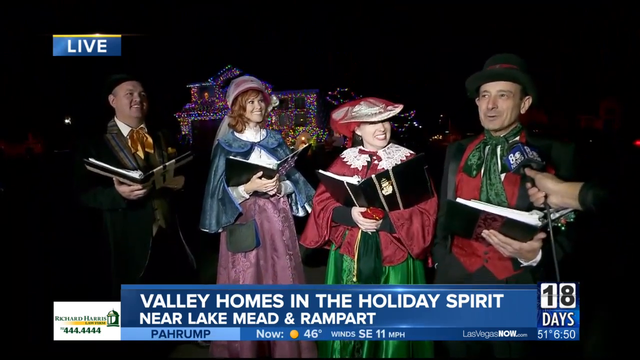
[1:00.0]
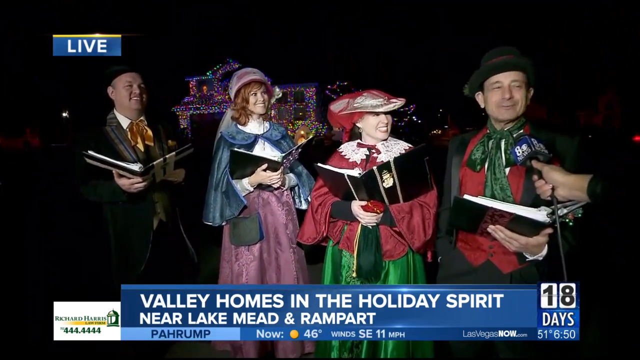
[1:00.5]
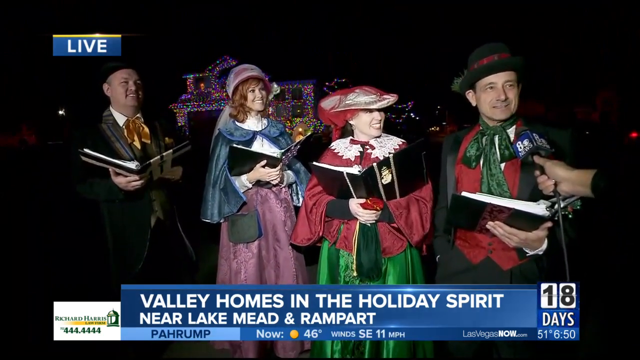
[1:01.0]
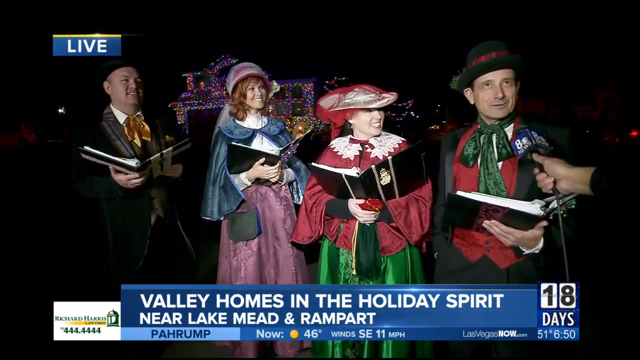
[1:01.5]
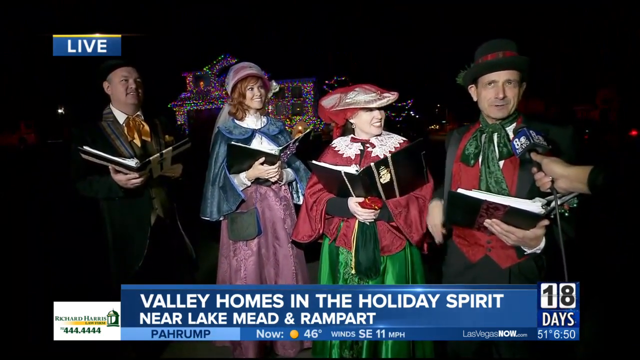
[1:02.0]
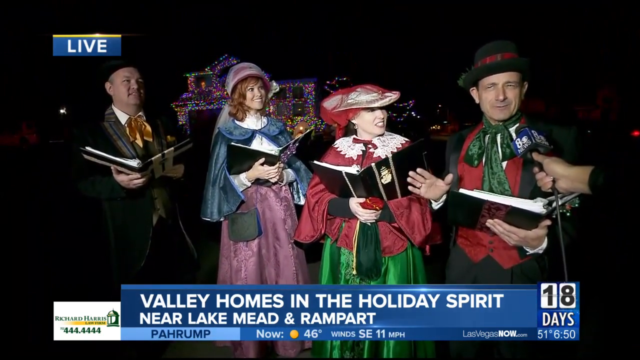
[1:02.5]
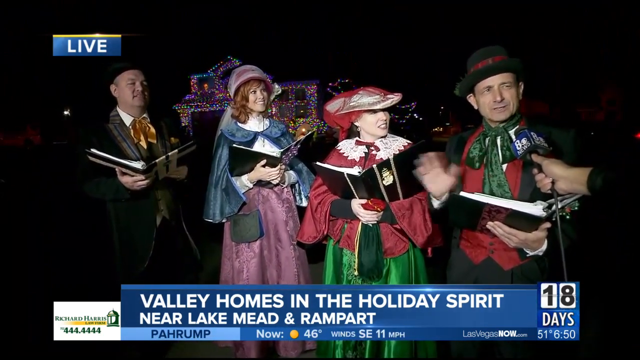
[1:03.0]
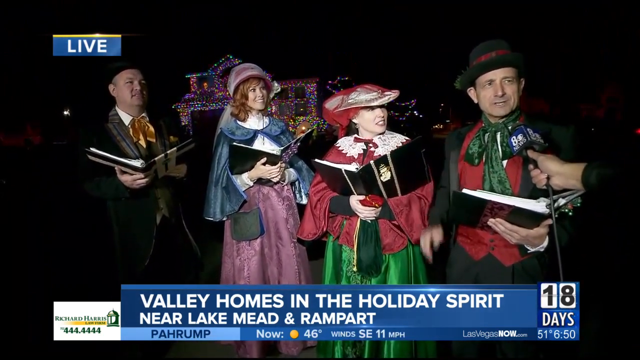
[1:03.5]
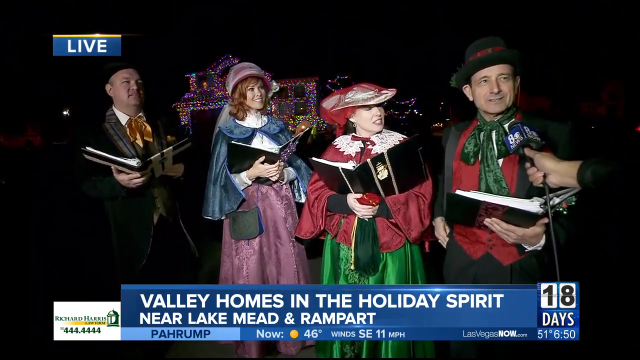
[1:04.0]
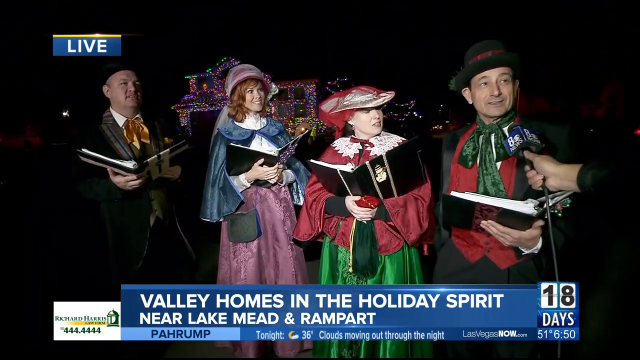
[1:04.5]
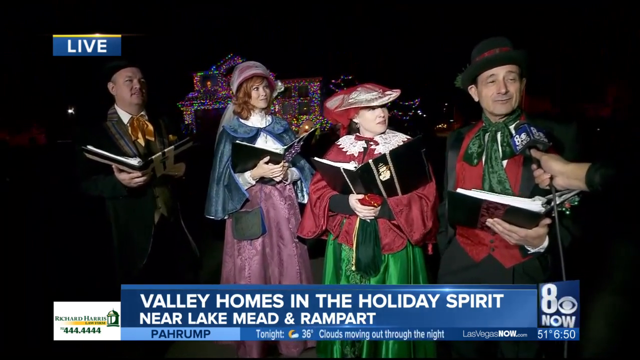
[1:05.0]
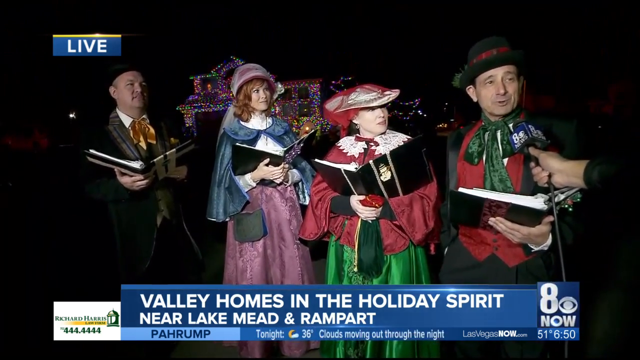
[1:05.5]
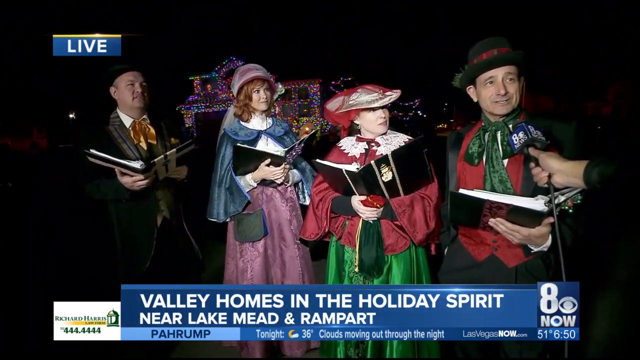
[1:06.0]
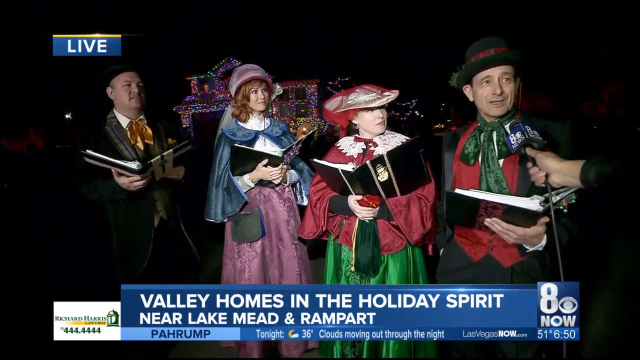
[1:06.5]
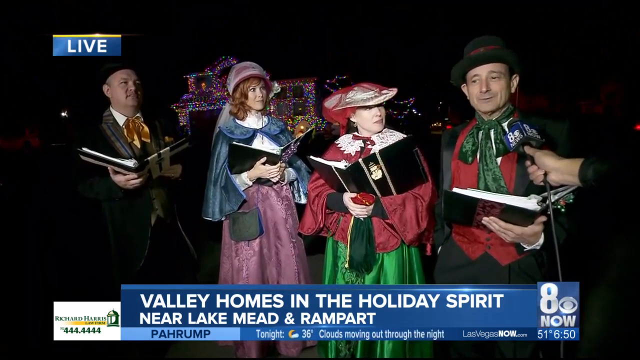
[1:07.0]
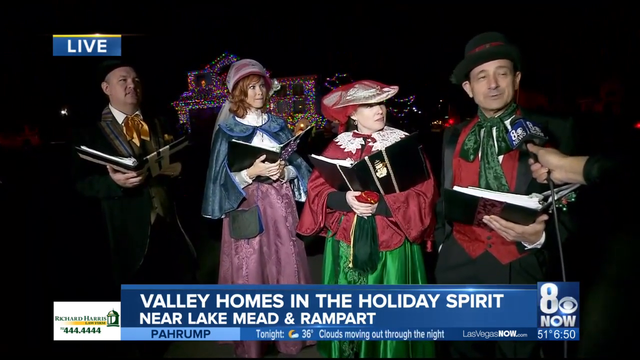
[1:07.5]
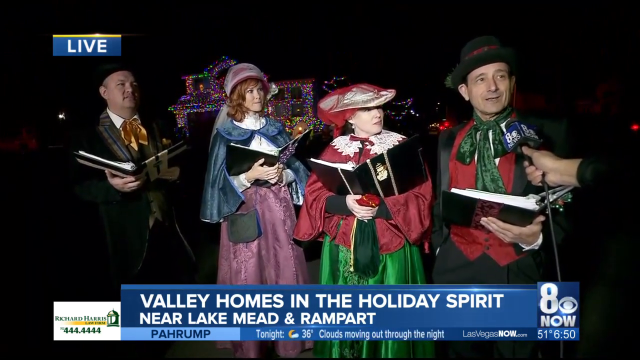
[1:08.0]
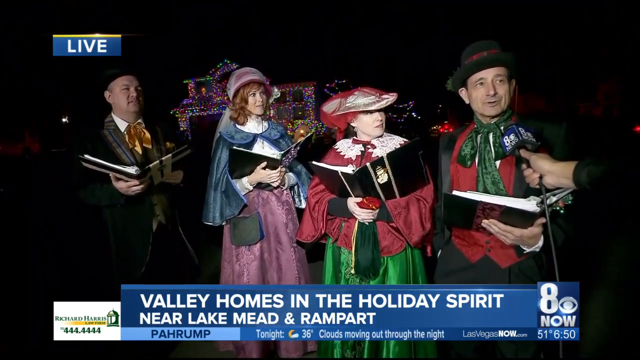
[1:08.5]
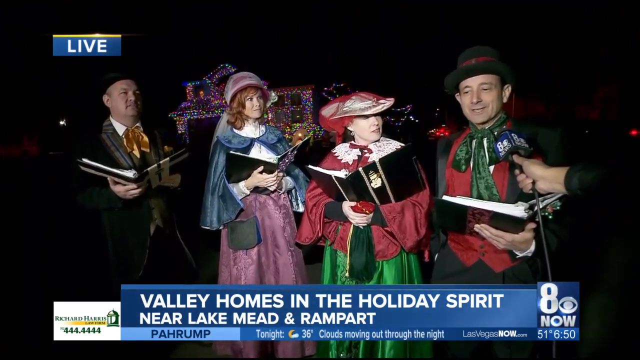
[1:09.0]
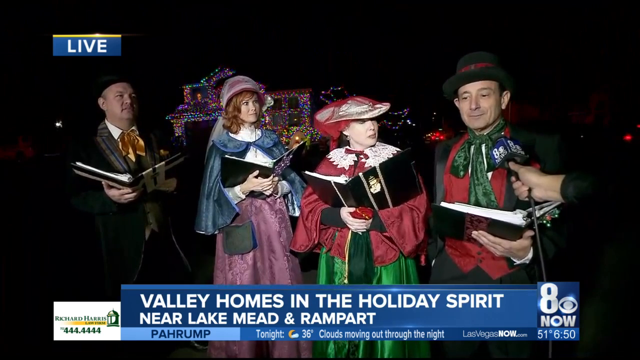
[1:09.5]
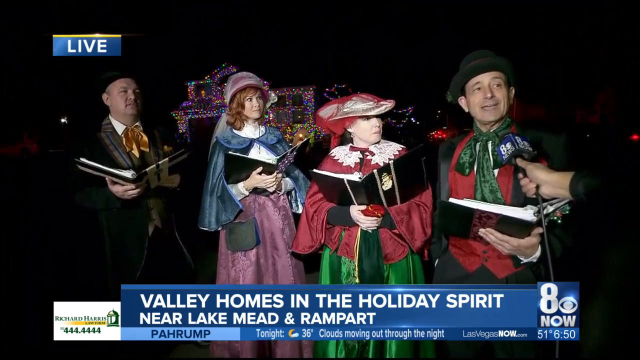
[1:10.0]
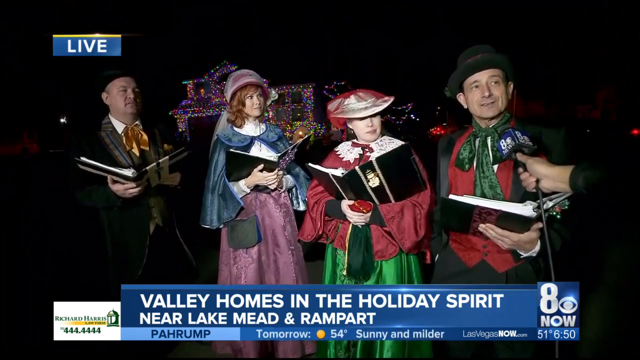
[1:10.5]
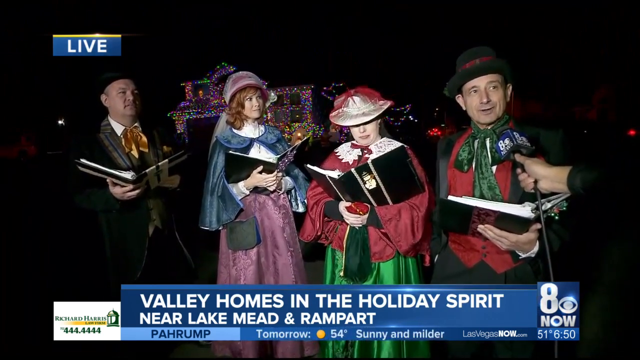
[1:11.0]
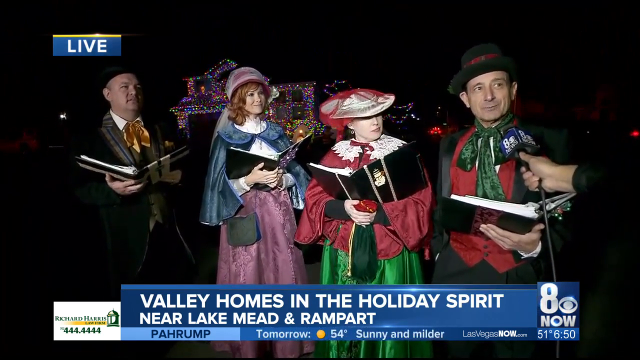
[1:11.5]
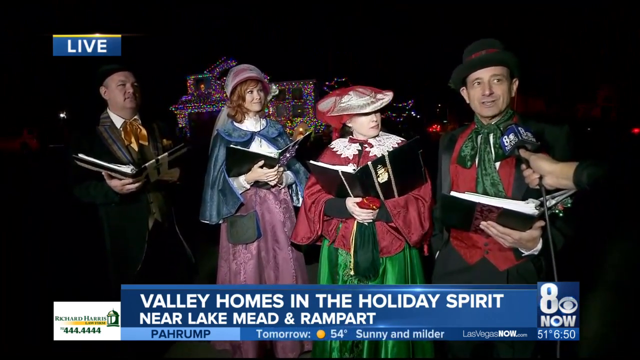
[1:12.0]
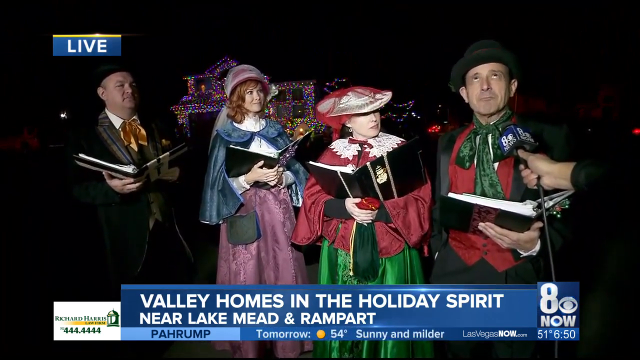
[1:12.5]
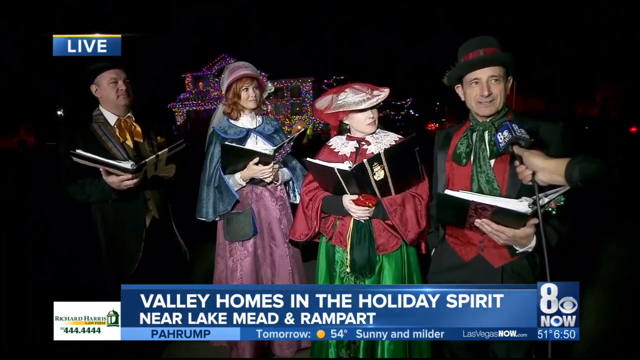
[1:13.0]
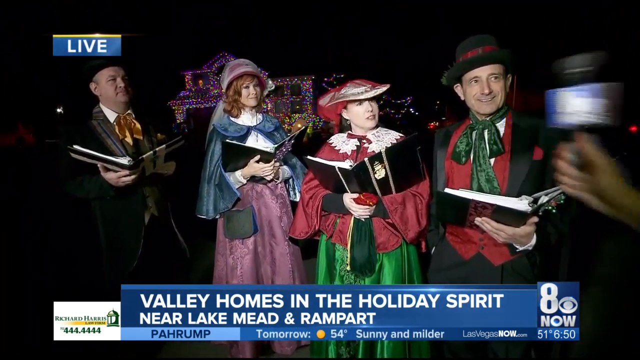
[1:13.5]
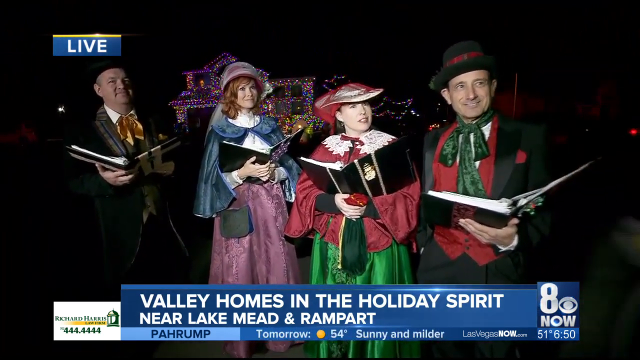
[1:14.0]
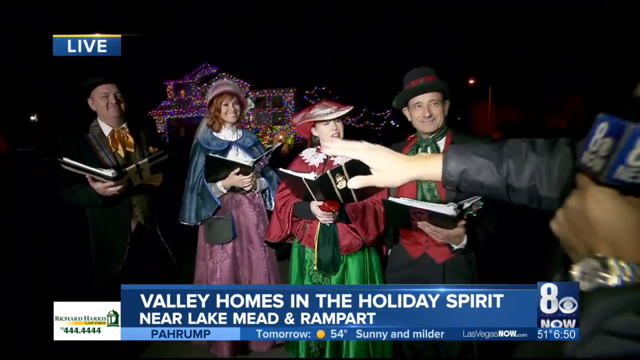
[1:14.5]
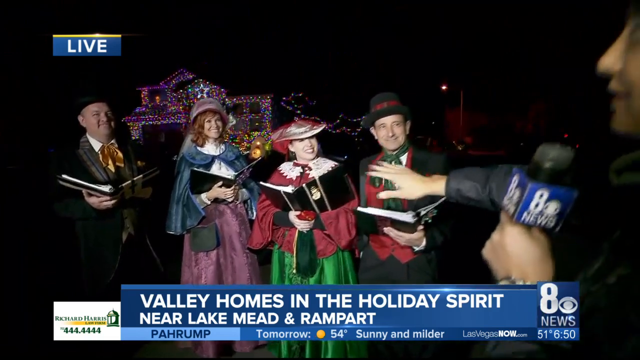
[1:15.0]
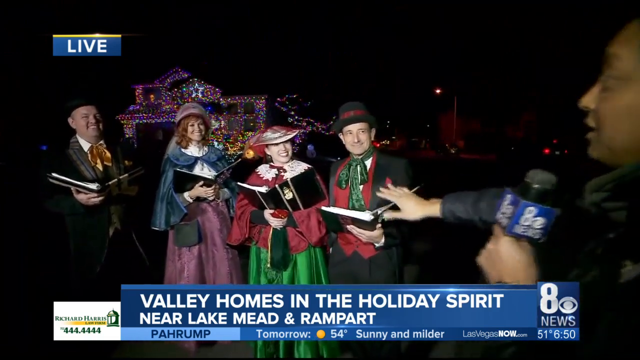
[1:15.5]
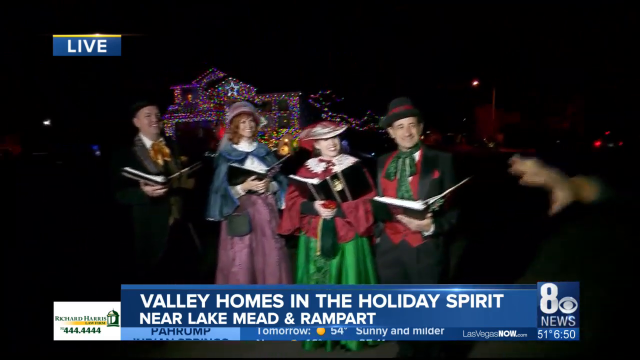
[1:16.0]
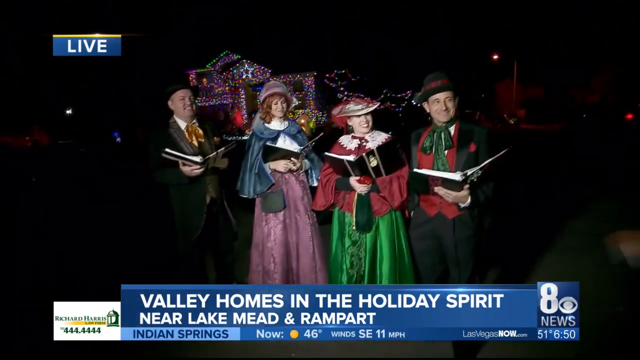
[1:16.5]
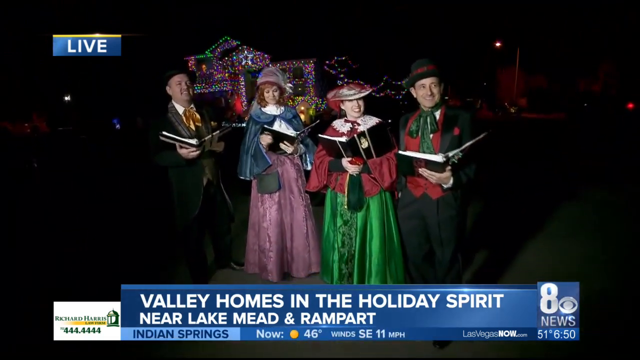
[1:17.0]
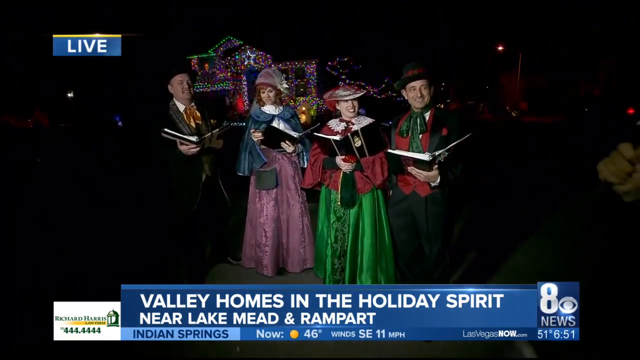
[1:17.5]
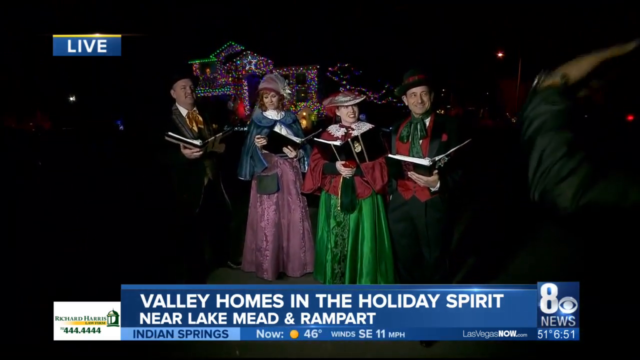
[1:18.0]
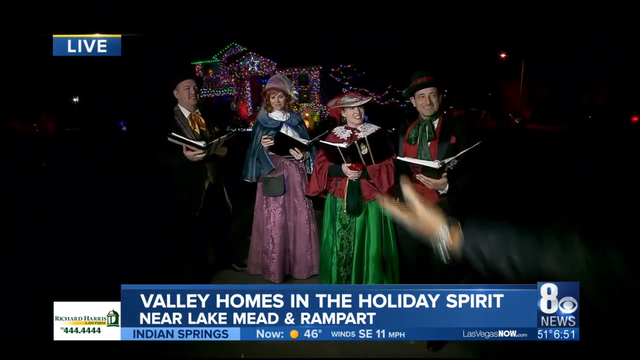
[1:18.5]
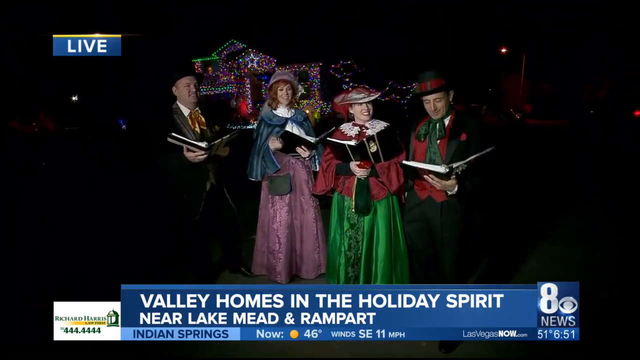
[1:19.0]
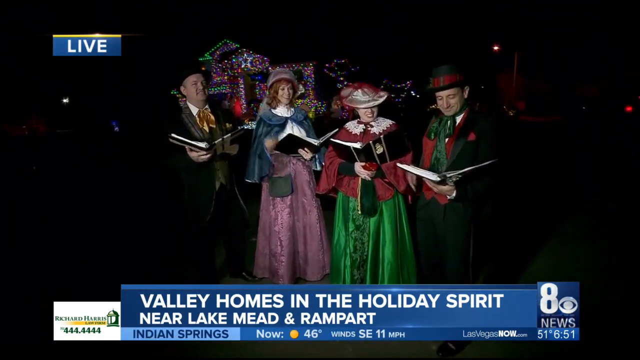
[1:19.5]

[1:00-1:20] The reporter spends a long time interviewing the male carol singer at the right end of the group of four. Their conversation is animated, and all the carol singers keep smiling happily as they chat. When the reporter finishes, he steps backwards as the camera pulls back to a wide shot of the singers. The carol singers look as if they are preparing to sing. The reporter is now out of vision to the right of the camera, but he gestures with his arm as if introducing them, and they all seem to ready themselves, looking down at their hymn books to find their lyrics. The lit-up house is still visible in the background on the dark evening.